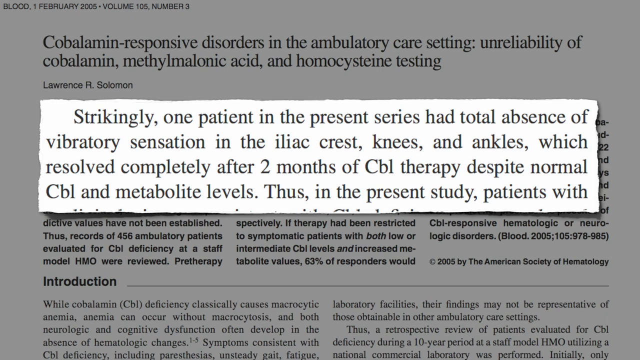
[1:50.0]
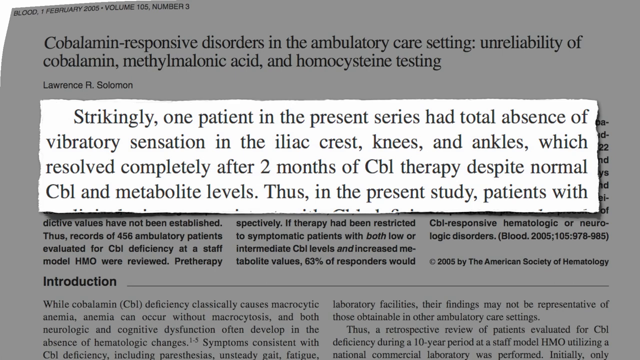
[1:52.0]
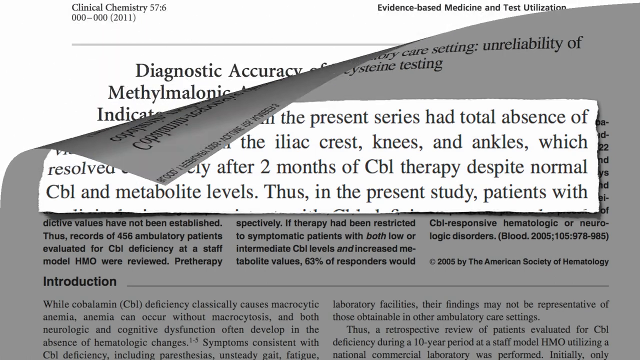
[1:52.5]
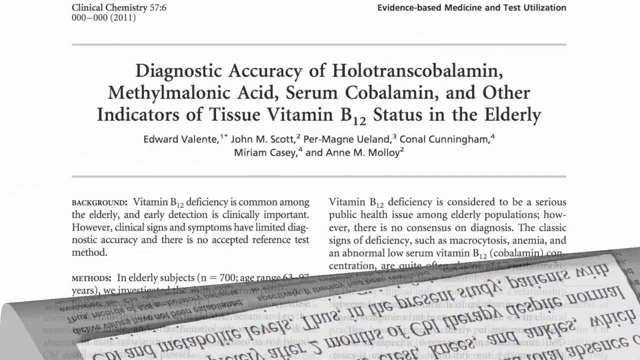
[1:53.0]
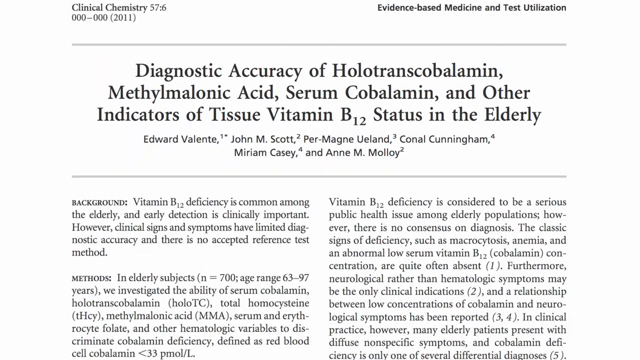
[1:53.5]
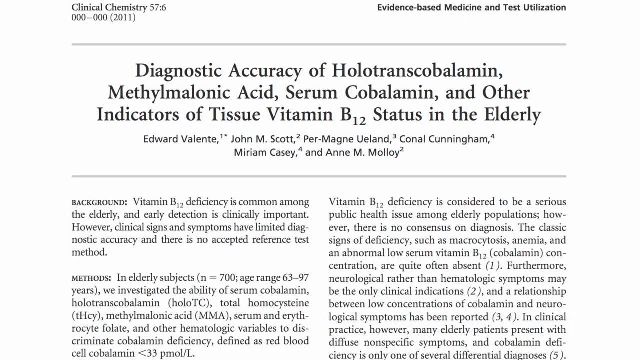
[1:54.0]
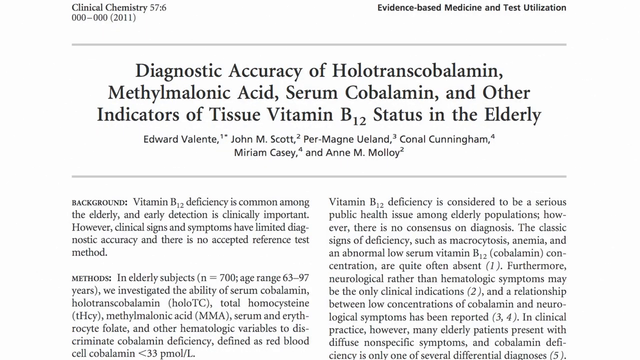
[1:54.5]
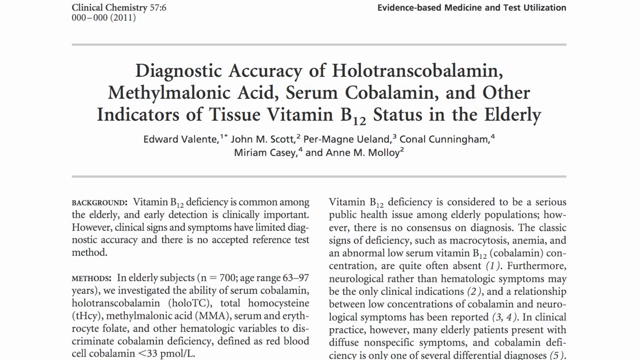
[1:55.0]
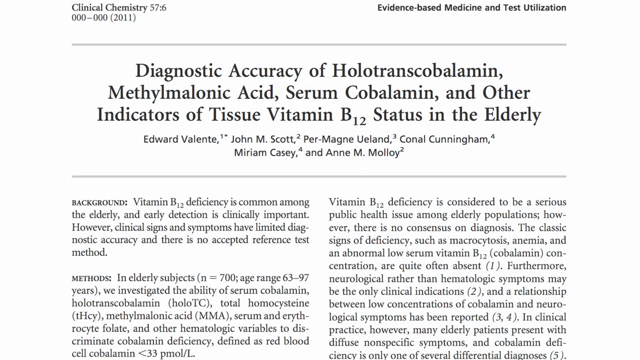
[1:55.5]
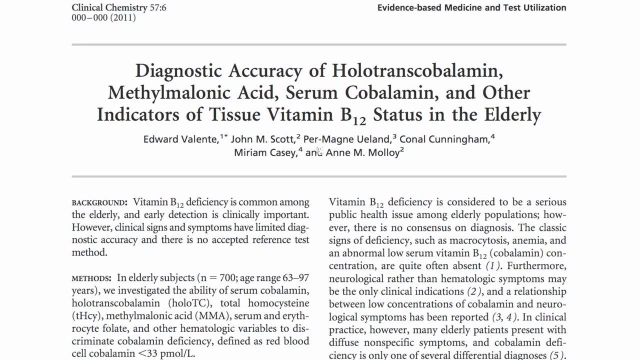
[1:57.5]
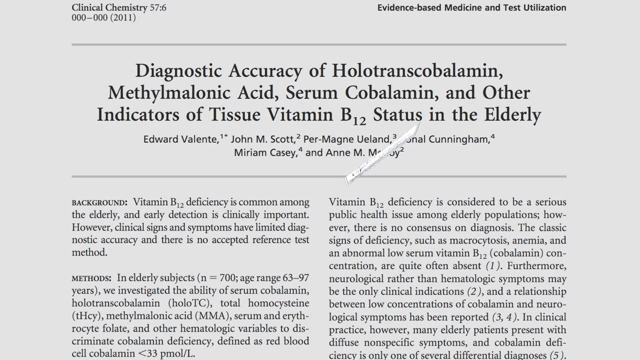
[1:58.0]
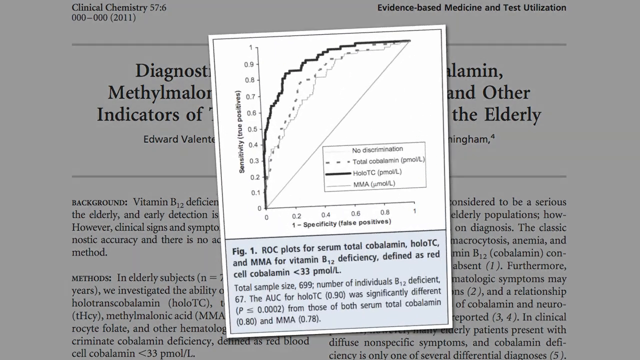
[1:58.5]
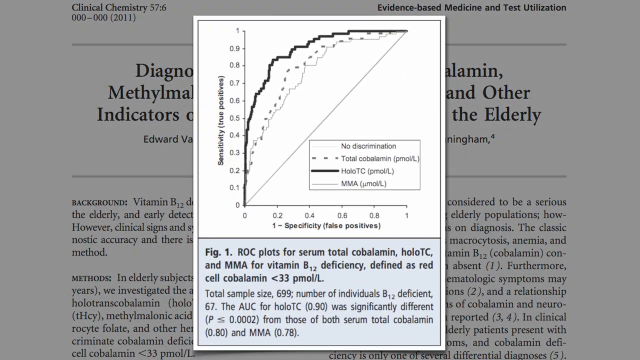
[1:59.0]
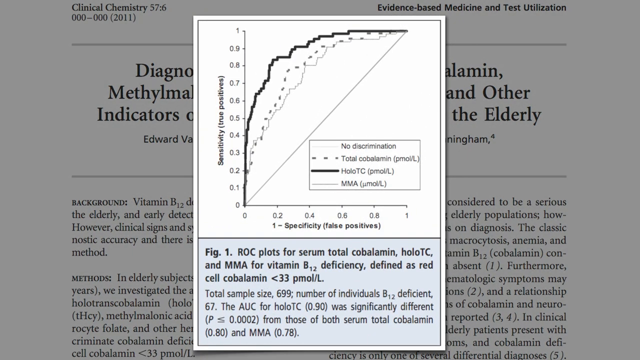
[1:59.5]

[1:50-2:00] That slide flips down from top to bottom and pulls away to show a slide with a lot of text. Its title is "Diagnostic Accuracy of Holo Transcobalamin Methylmalonic Acid Serum Cobalamin and Other Indicators of Tissue Vitamin B Status in the Elderly" by Edward Valentin Scott, John M. Scott, Per Magnuland, Connell Cunningham, Miriam Casey and M. M. Molle, with a few paragraphs of text under the title. A page then overlays the image and somewhat dims the rest of the screen: a vertically rectangular white graph. The x-axis says "specificity, false positive" and the y-axis says "true positive." The plot looks somewhat like a bow and arrow: a line where the bow's string would be goes up at a fixed rate from 0 to 1 and is attributed to MMA, and a bolder line attributed to holo TC looks like the curving wooden part of the bow, rising very fast from 0 to 0.5 and then curving in a not-so-seamless way to end at 1. A dotted line and a smaller line also curve in a similar way from 0 to 1. Underneath is a blue box with text.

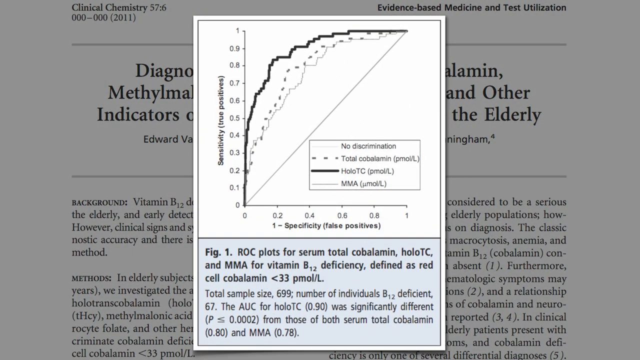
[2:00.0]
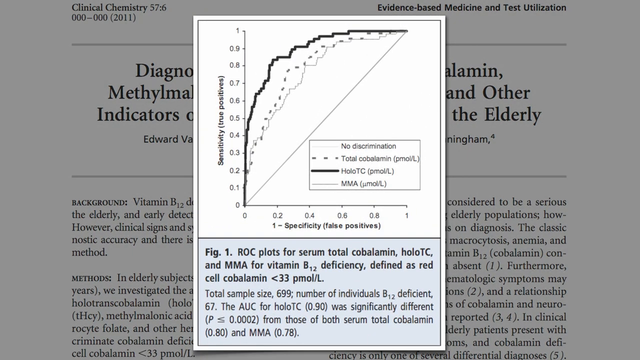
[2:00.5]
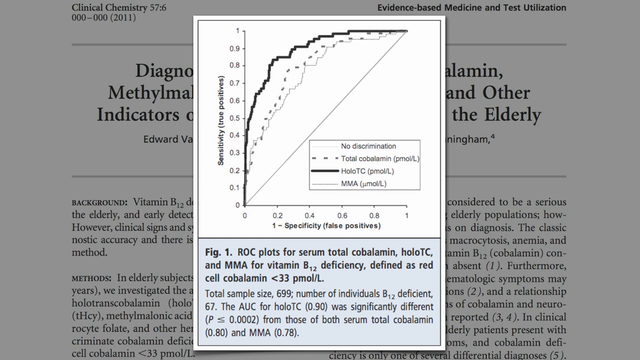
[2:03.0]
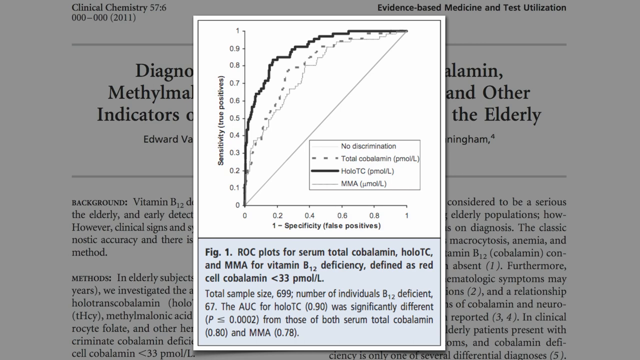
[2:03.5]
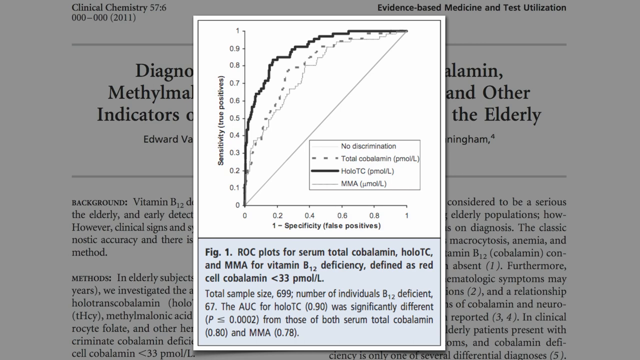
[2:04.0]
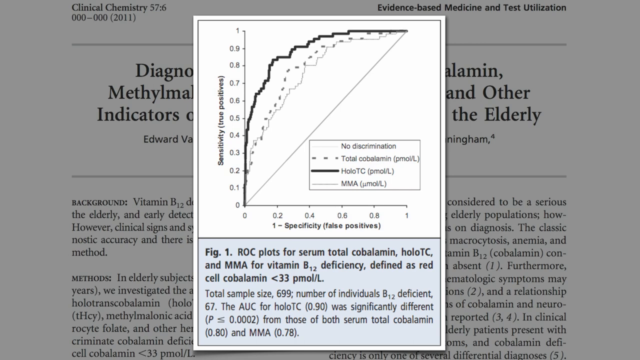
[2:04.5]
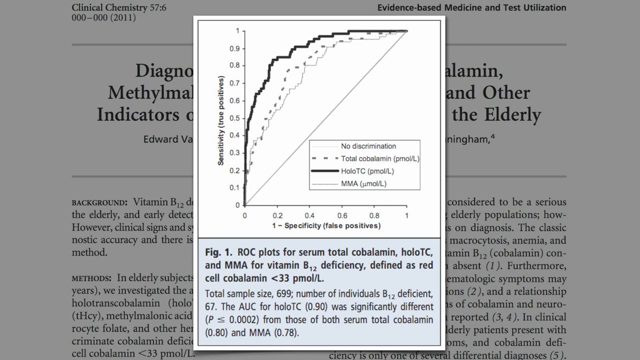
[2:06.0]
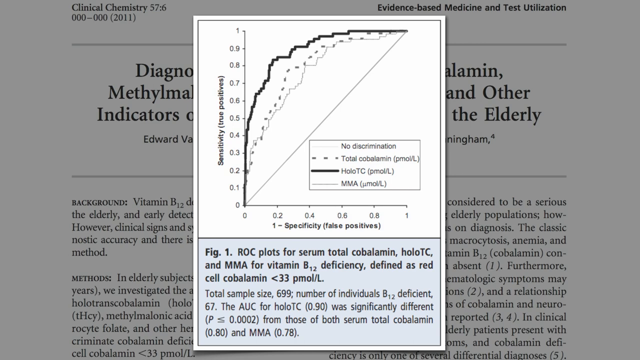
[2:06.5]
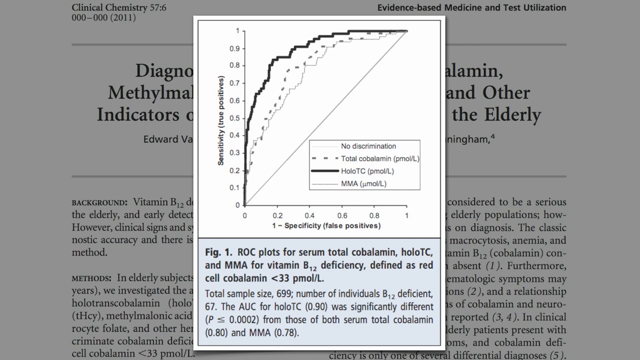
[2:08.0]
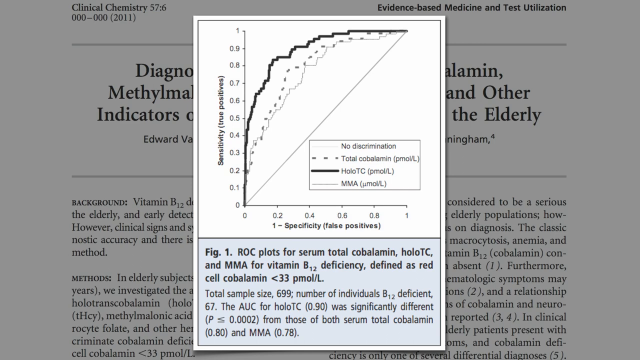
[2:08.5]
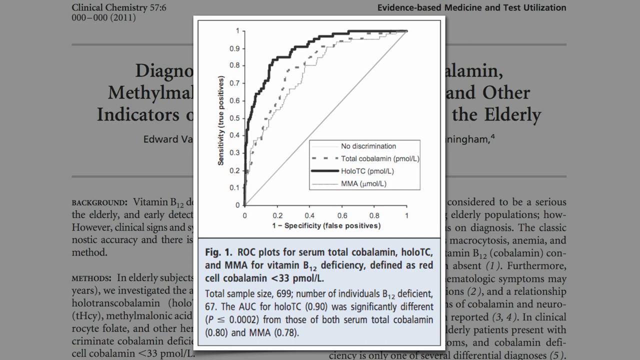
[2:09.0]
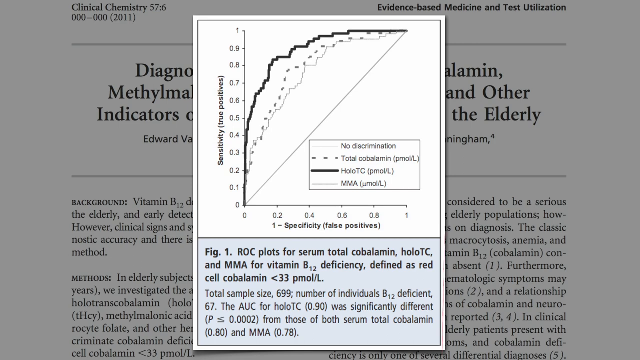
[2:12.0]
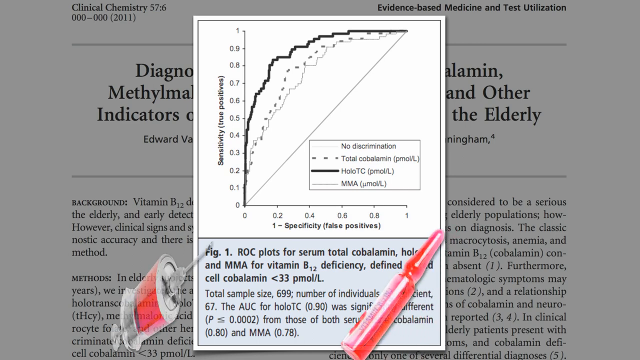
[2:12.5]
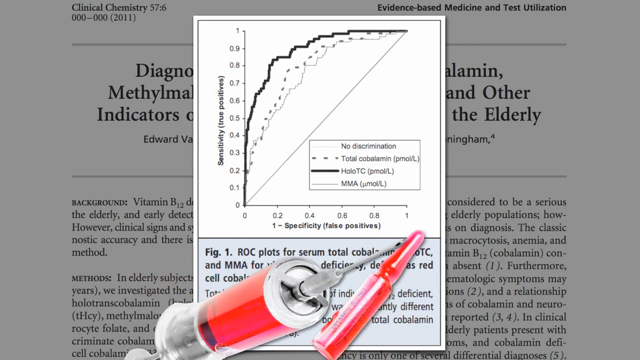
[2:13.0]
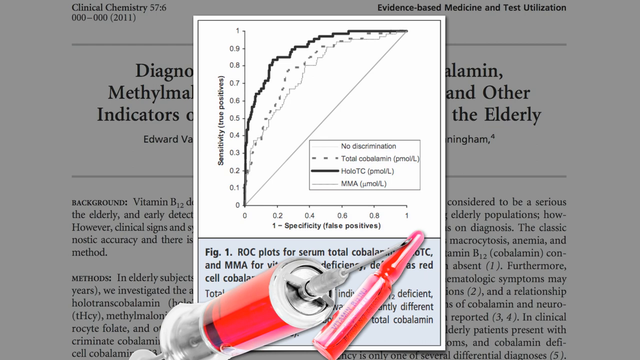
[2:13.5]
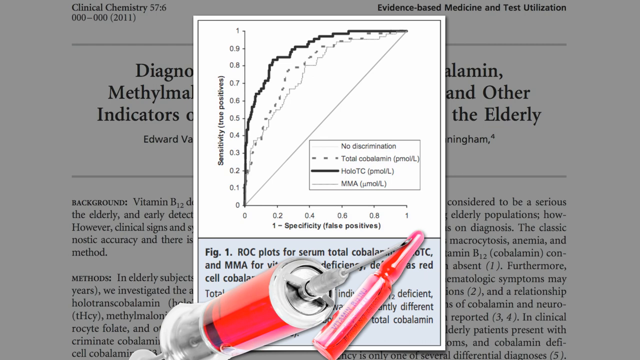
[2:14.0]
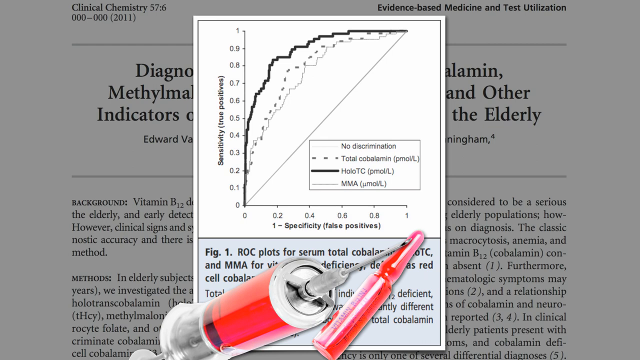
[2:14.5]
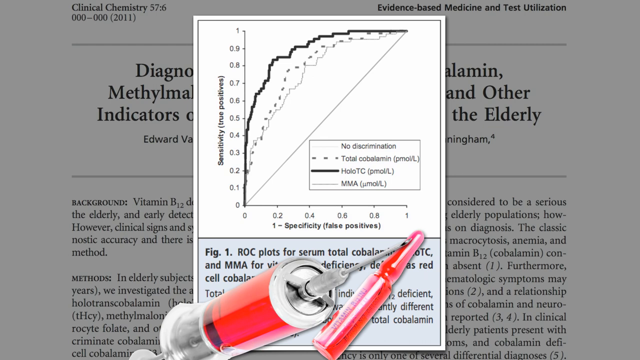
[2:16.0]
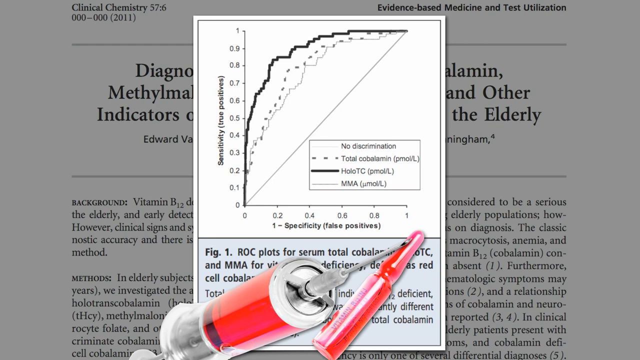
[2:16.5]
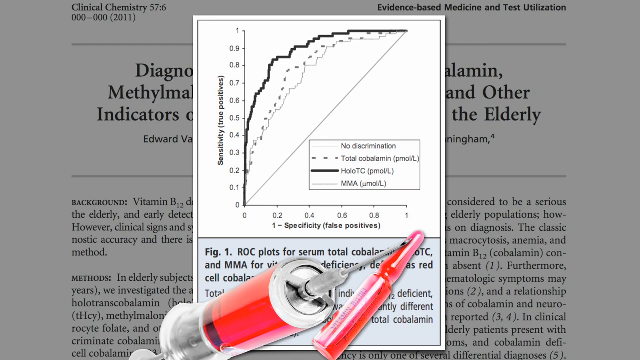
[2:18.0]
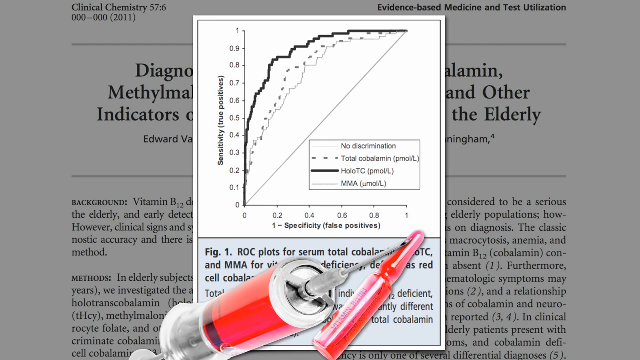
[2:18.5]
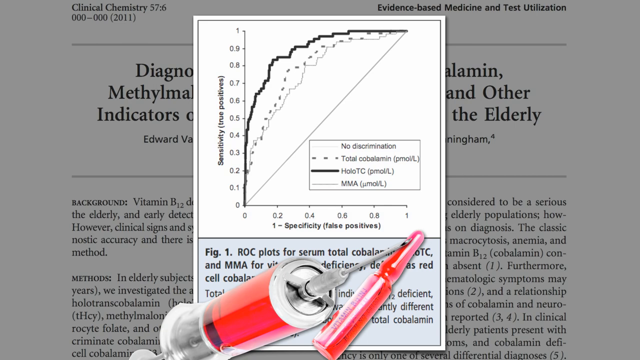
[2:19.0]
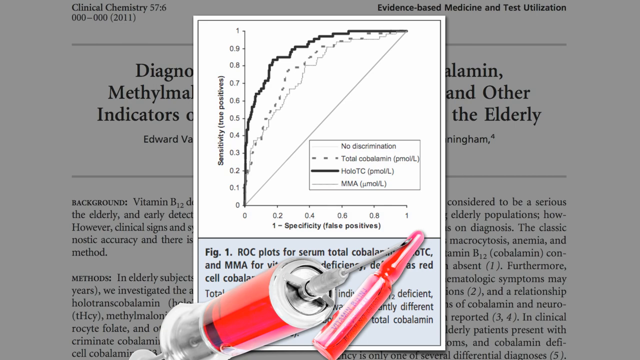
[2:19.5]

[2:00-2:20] The graph stays on the screen, and the text at the bottom in a light blue box says "FIG1 ROC plots for serum total, cobalamin, holotc, and MMA for vitamin B total deficiency, defined as red cell cobalamin," with more text underneath about the graph data. A small cutout-style graphic of a syringe filled with red, with a red cap, appears at the bottom of the screen over the blue text box. The syringe, needle and cap are visible, but the bottom of the syringe, including the plunger, is partly cropped out at the bottom of the screen. The graph, with what looks like a bow shape and a large curve at the top, is still visible.